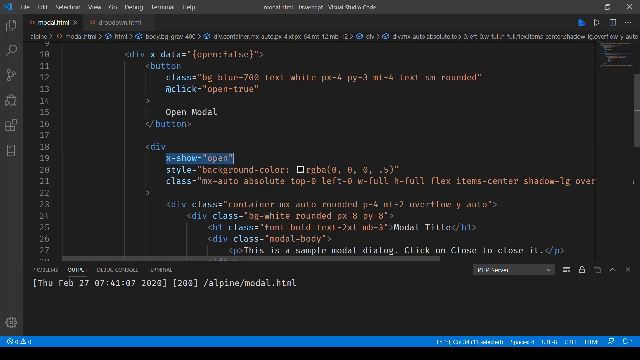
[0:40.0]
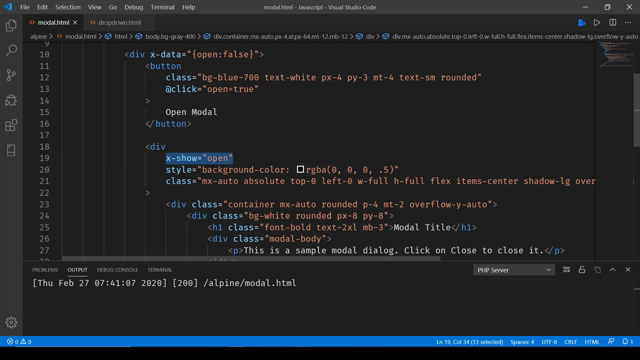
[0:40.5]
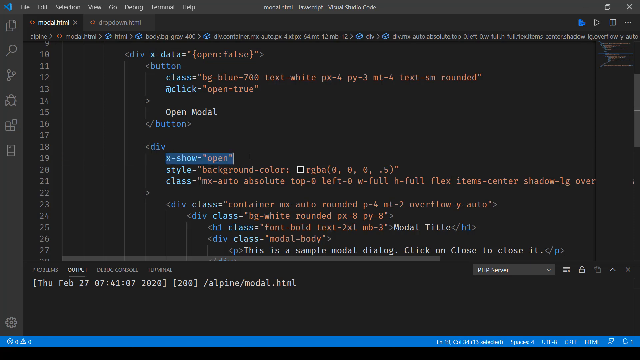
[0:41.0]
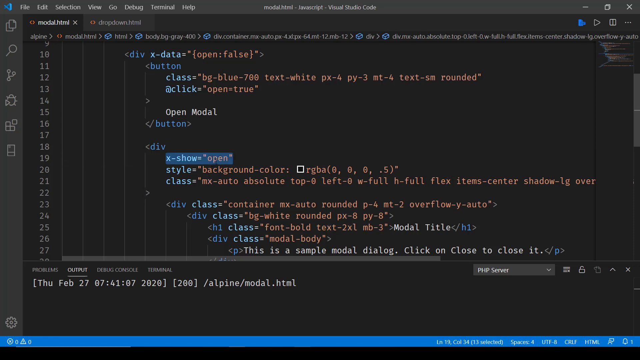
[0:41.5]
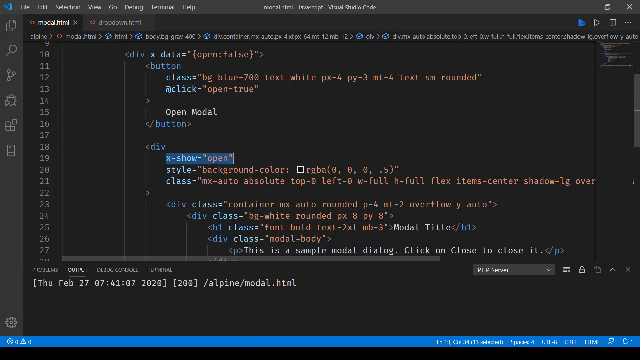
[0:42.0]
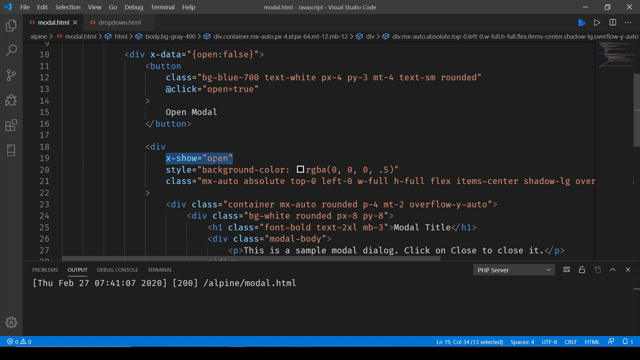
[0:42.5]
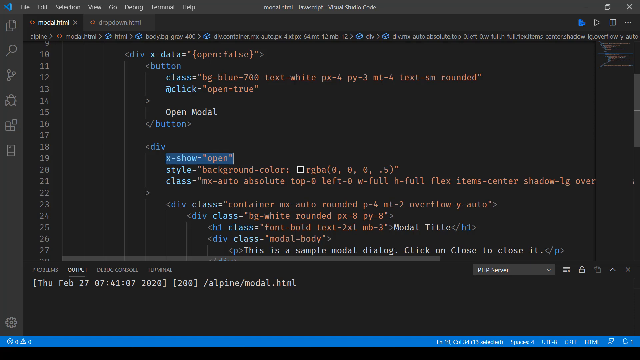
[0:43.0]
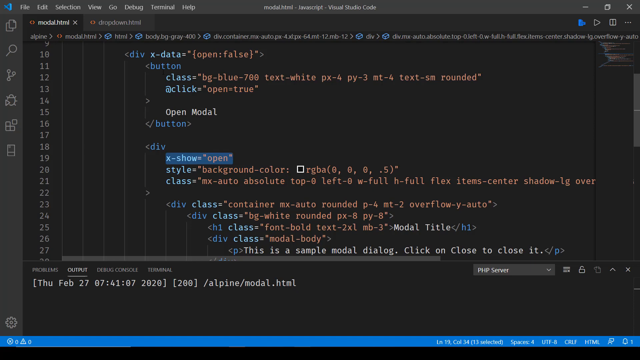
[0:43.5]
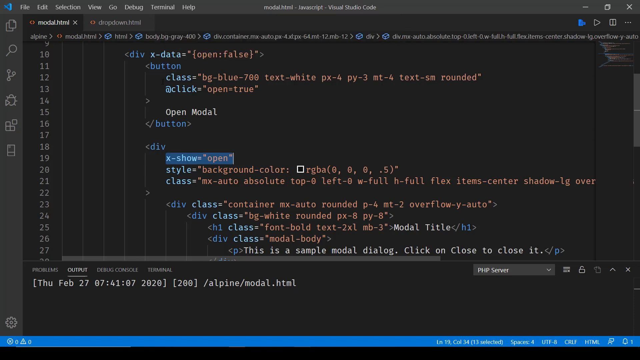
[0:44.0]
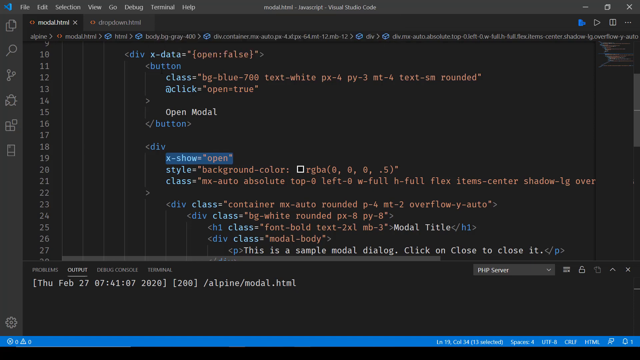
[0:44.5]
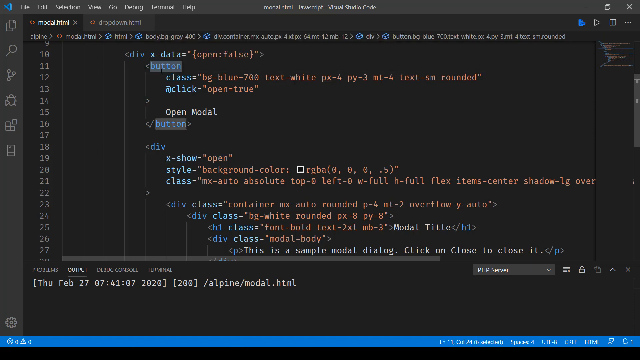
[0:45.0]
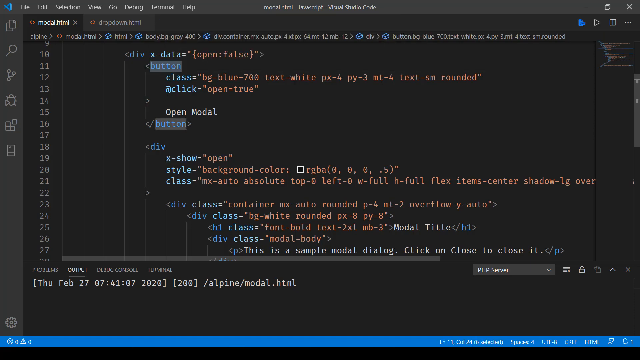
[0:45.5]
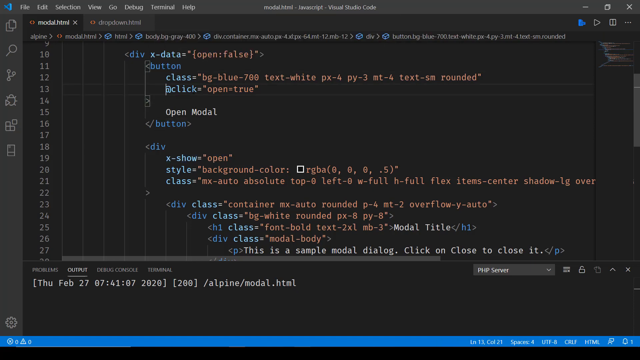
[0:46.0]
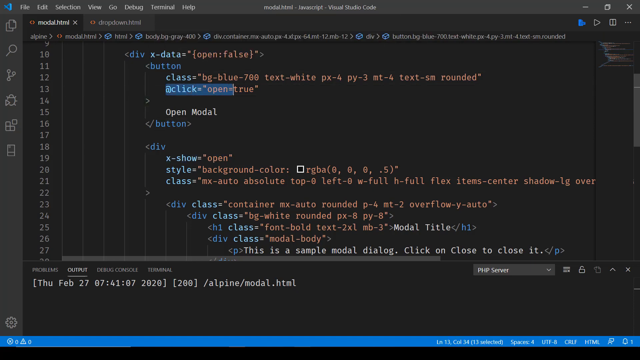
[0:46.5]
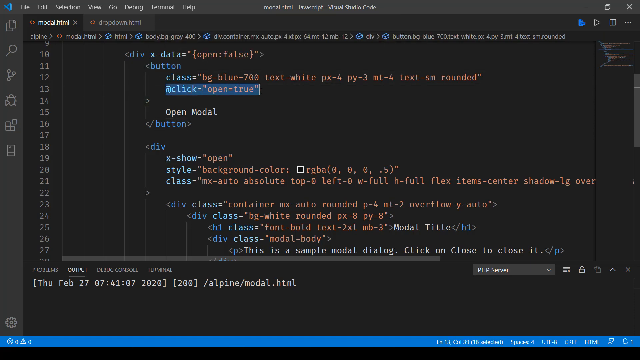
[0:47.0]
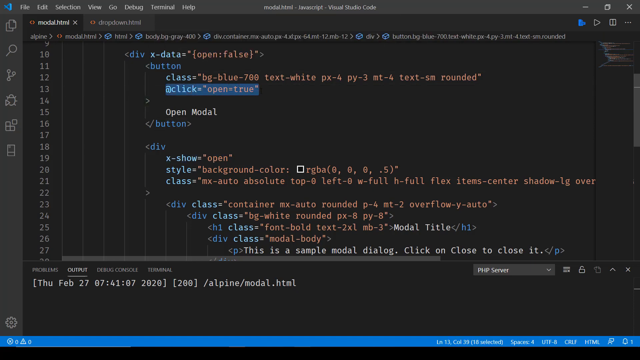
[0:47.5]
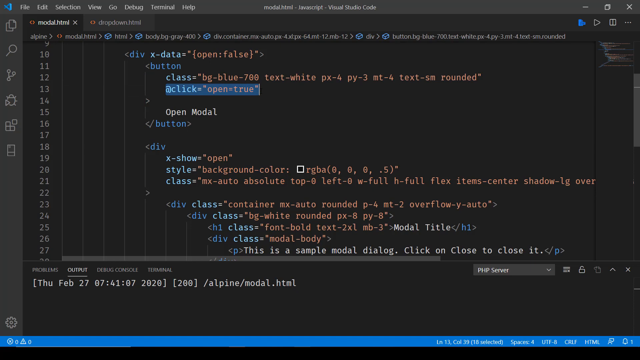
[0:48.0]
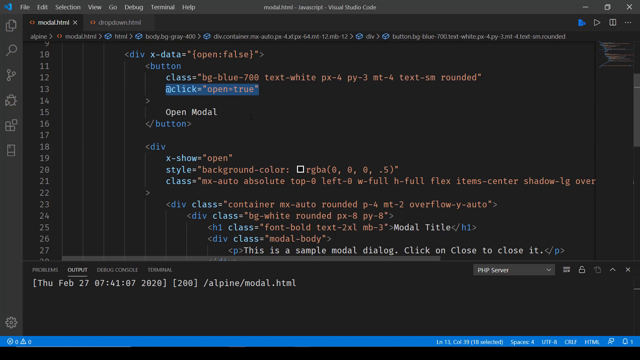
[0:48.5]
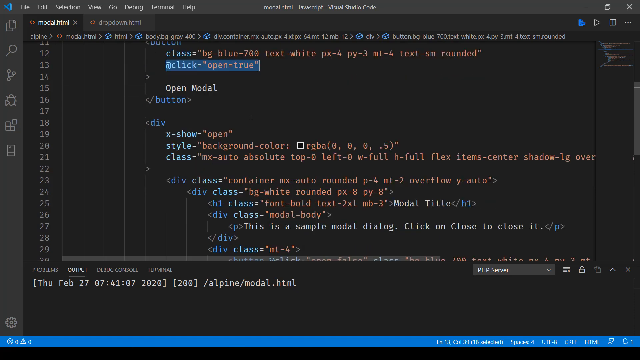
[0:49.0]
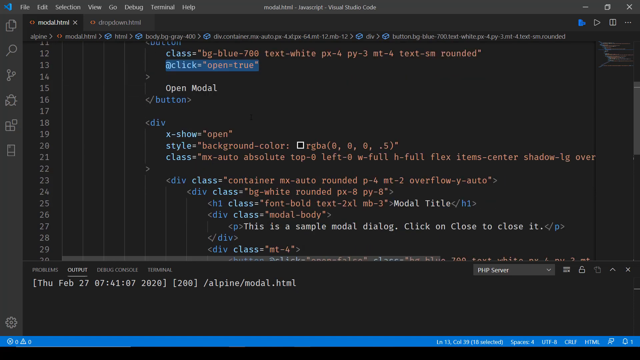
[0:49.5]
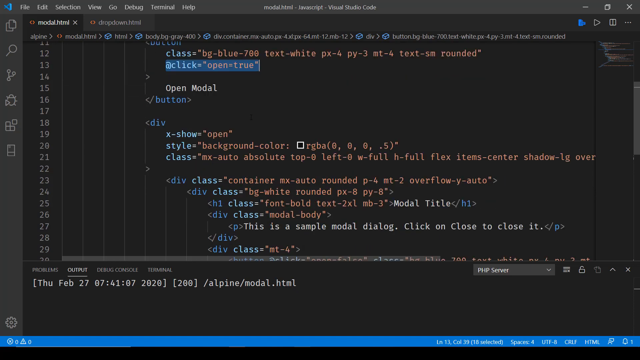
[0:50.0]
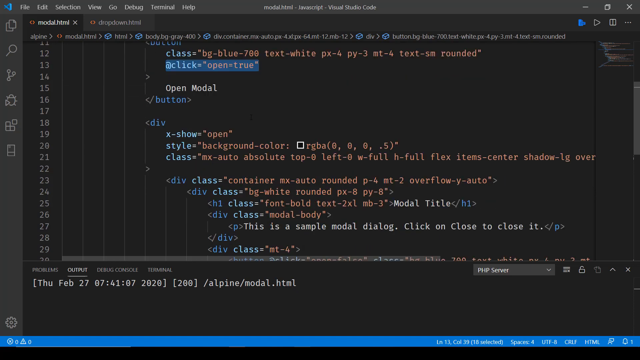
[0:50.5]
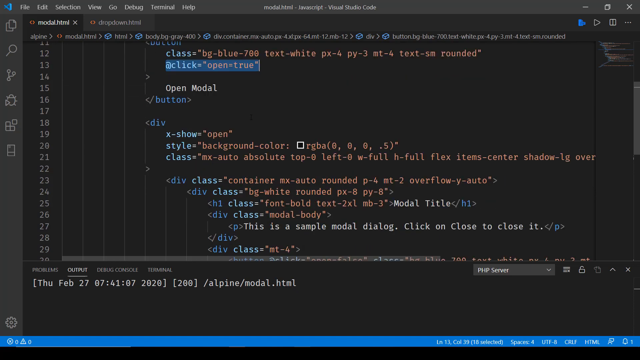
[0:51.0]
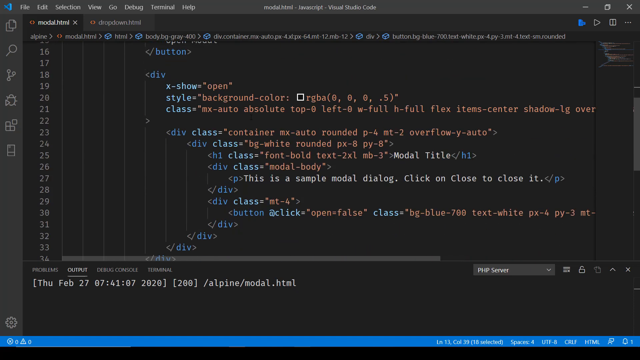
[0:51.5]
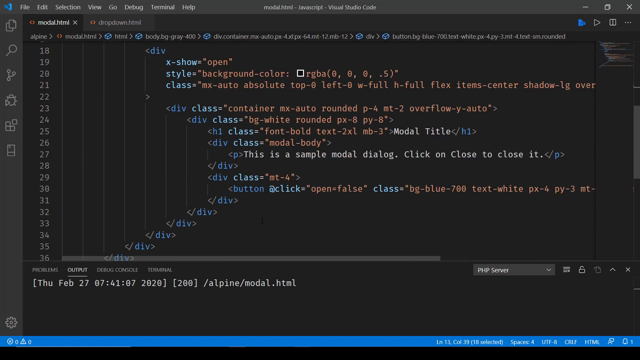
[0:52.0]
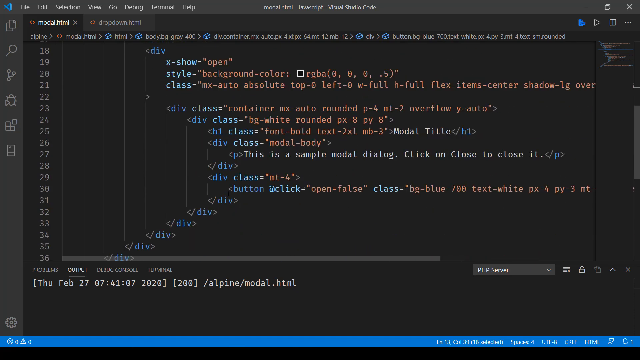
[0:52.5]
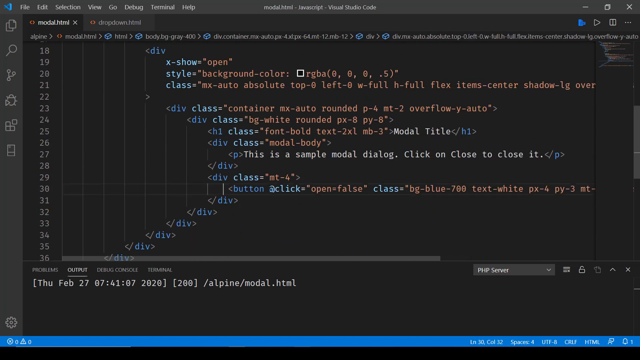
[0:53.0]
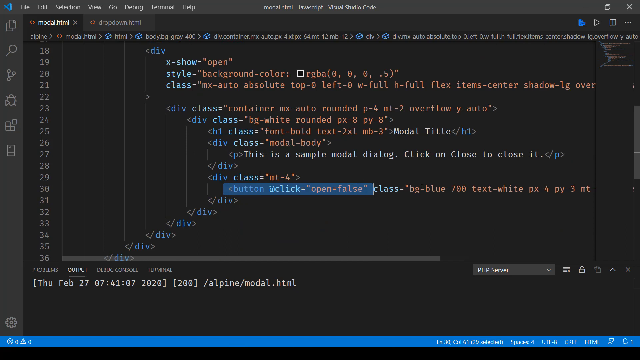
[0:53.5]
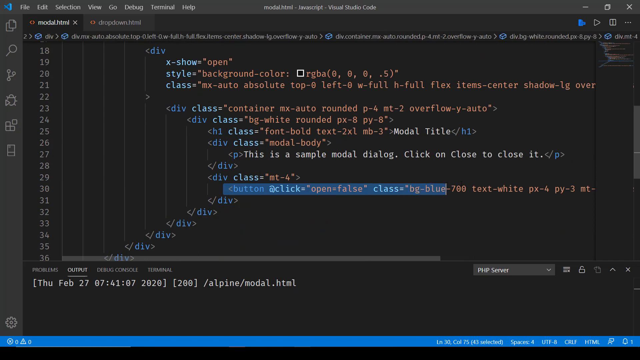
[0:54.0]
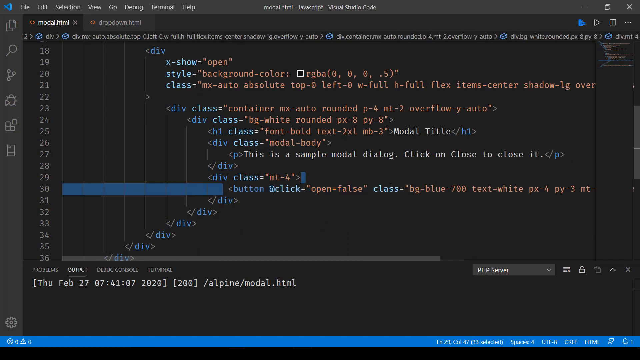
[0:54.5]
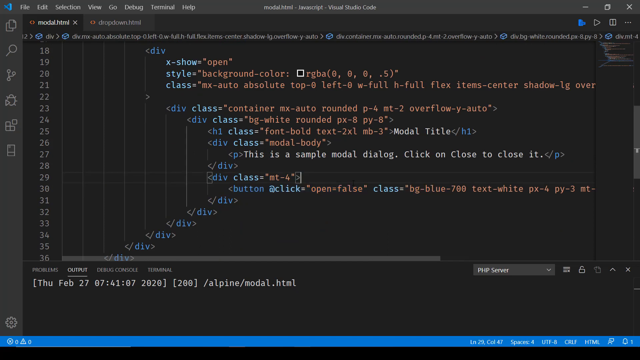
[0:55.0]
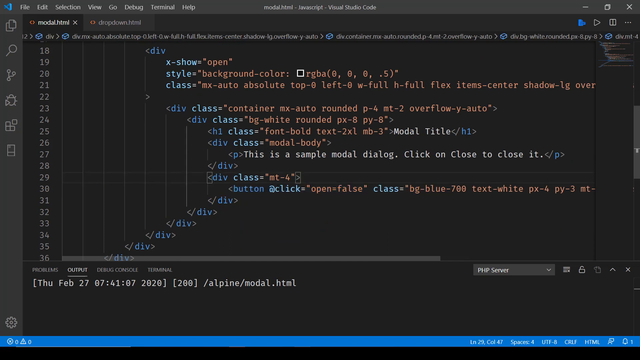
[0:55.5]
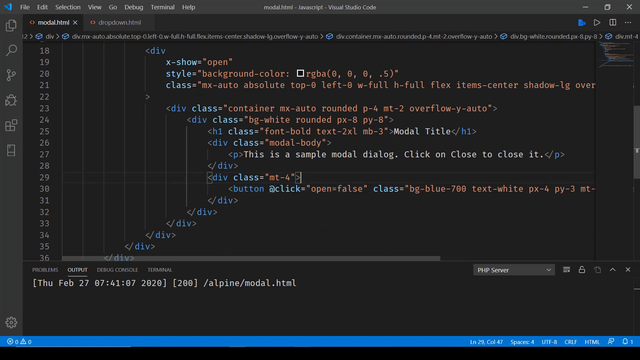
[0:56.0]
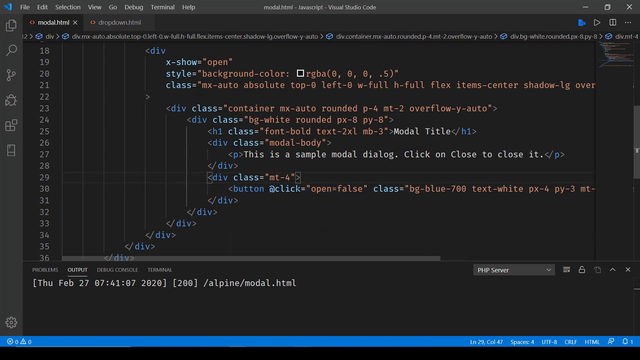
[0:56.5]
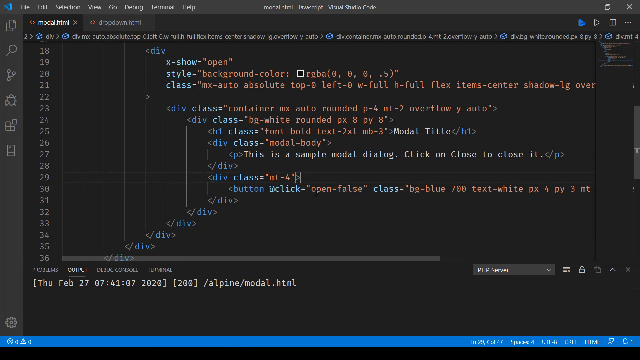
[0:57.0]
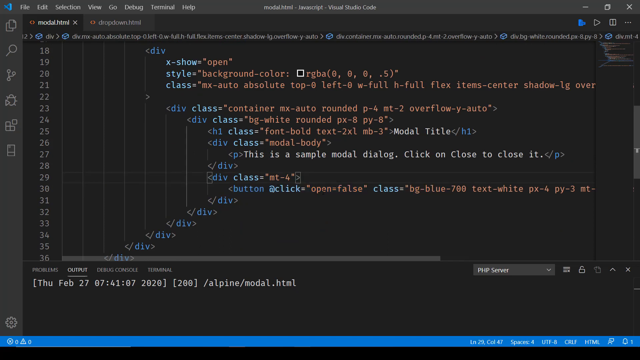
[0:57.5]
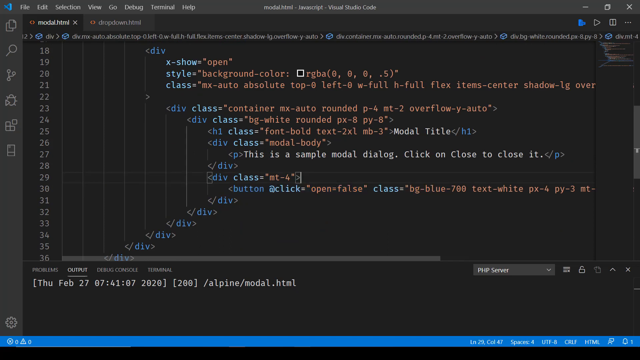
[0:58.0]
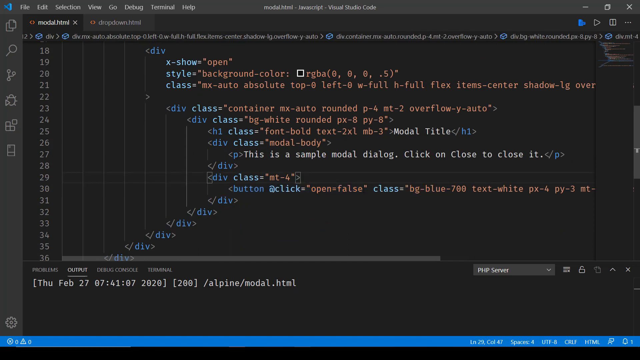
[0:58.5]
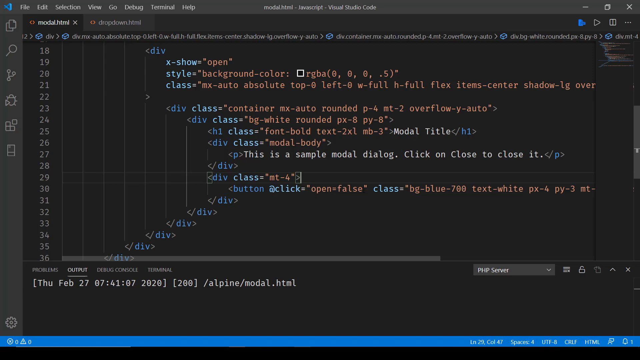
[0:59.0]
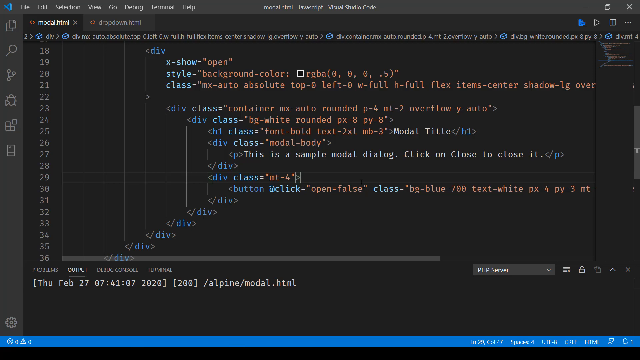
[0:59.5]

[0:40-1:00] The person looks over the HTML code and deletes a line of code. They appear to be about to delete another part, possibly the div class section or the button section. The code seems to be the basic code for the localhost site. It includes a background color of rgba 0, 0, 0, .5, apparently gray, and a container auto-rounded .4 setting. The code also contains the dialog text "this is a simple modal dialog, click on close to close it," which seems to be displayed when that code runs.